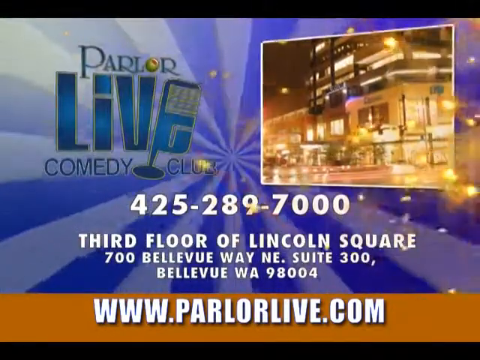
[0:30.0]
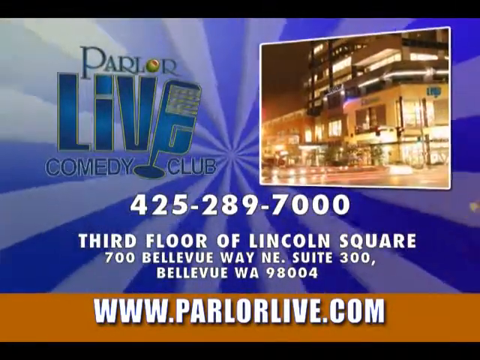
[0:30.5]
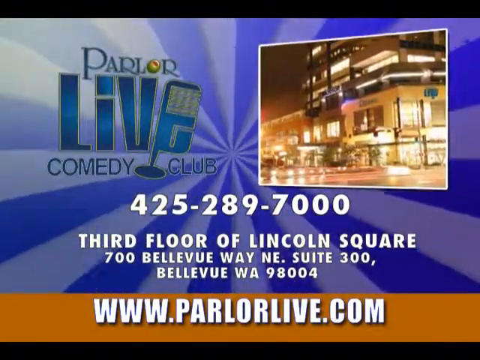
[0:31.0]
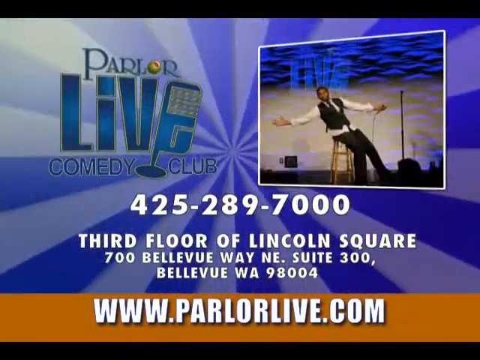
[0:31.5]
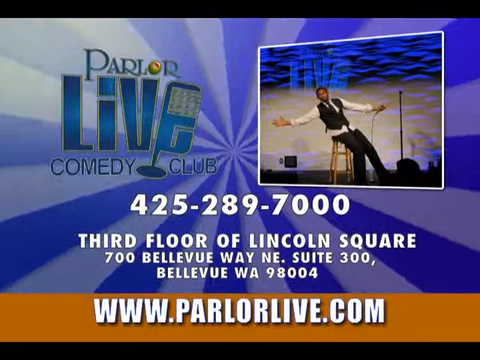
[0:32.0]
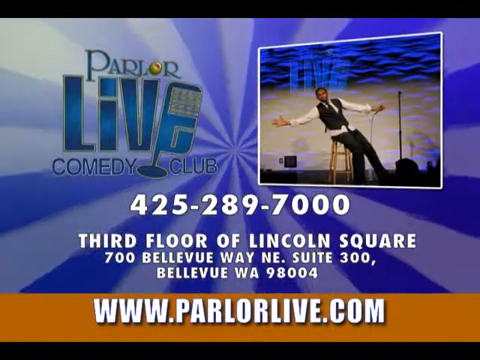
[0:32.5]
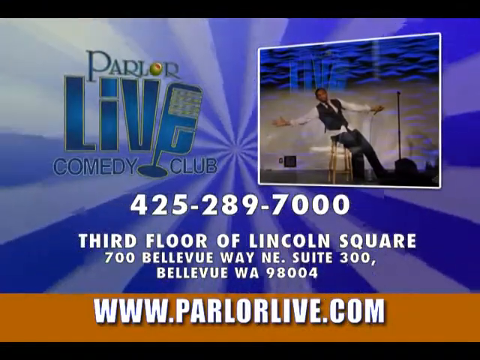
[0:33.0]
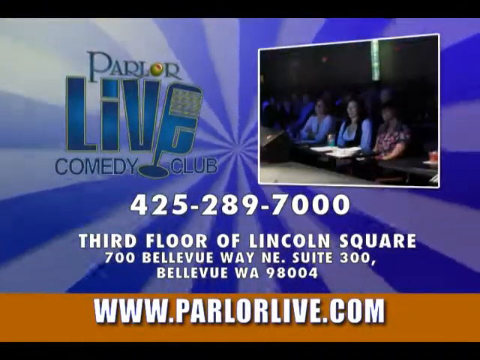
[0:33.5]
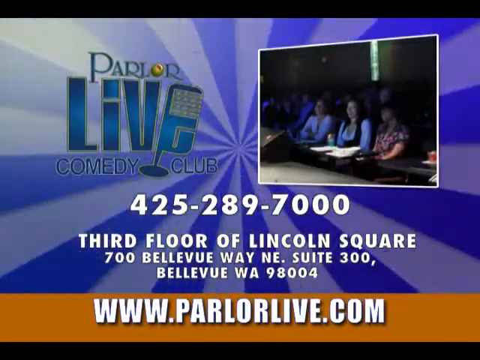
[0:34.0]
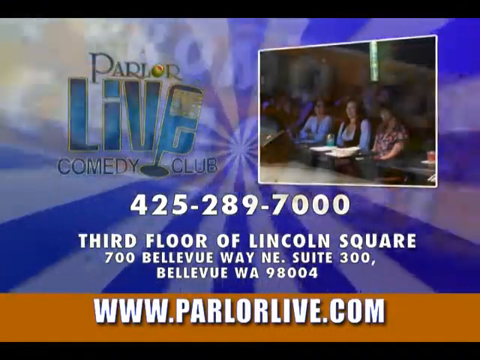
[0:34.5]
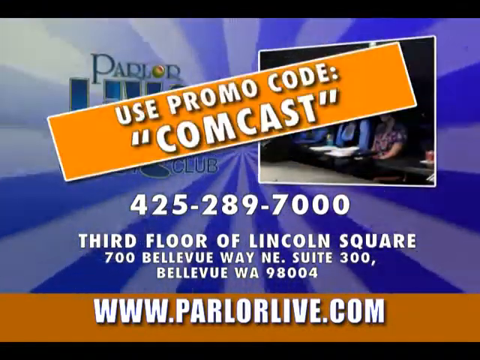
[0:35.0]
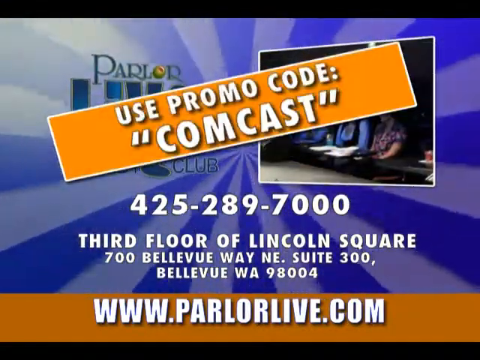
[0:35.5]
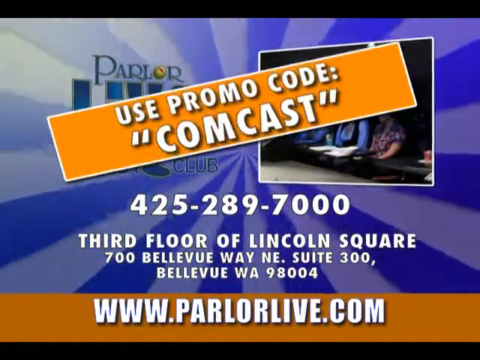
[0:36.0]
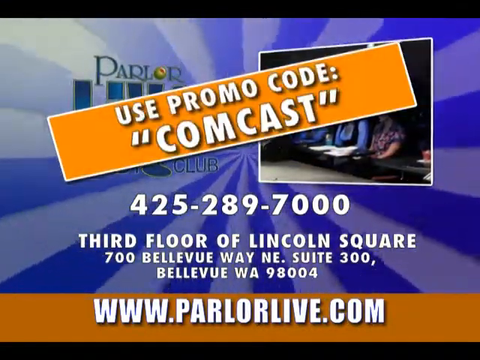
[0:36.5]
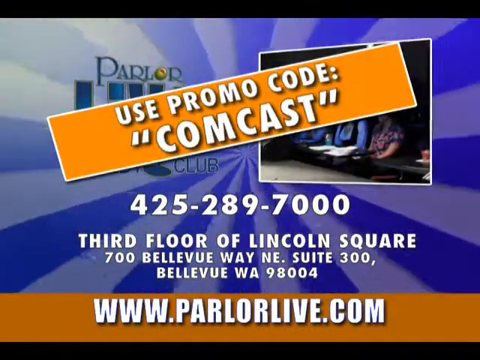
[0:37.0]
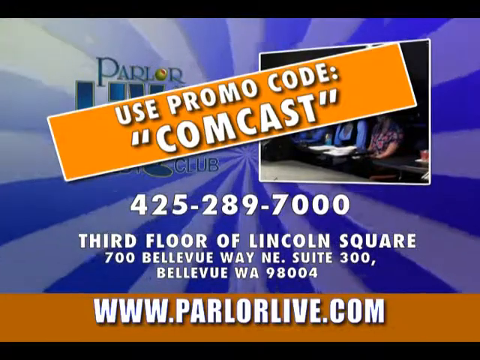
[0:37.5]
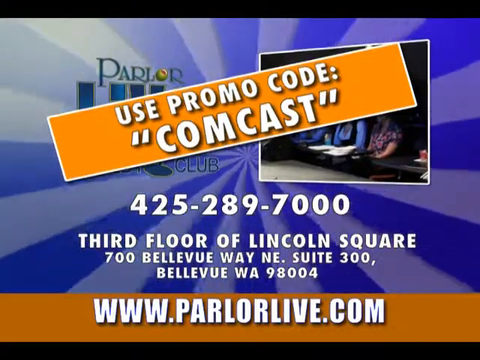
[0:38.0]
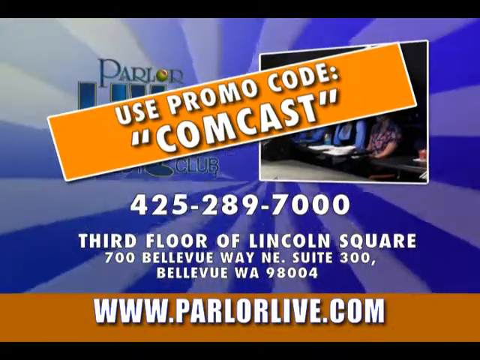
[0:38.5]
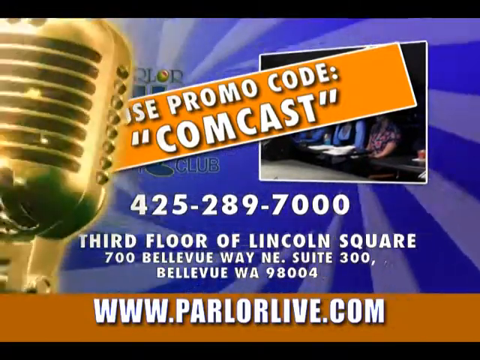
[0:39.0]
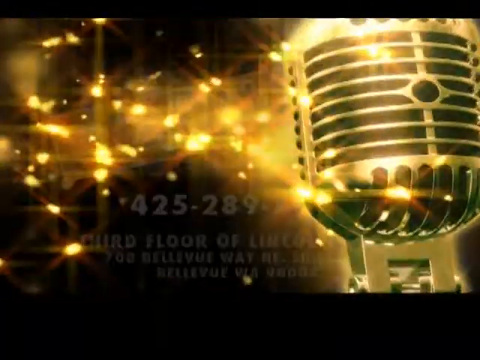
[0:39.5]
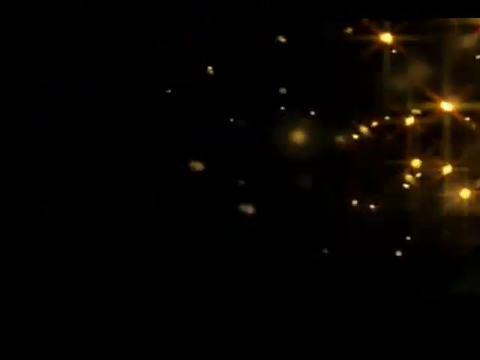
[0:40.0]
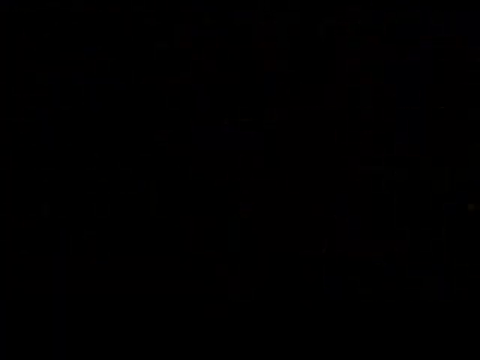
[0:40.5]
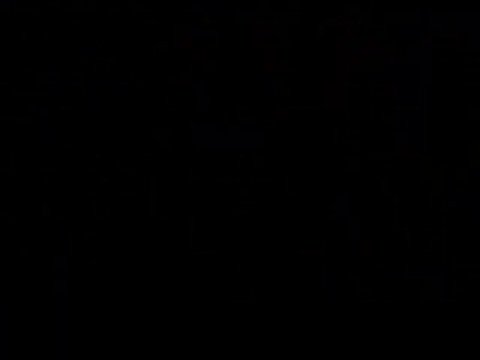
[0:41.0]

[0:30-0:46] The end of the advertisement for the Parlor Live comedy event shows a phone number, 425-289-7000, and the venue address at Lincoln Square, 700 Bellevue Way NE, Bellevue, 98004. The website www.parlorlive.com is displayed along with the promo code "Comcast". A mic is shown, and the advertisement closes on the website of the venue that made it.